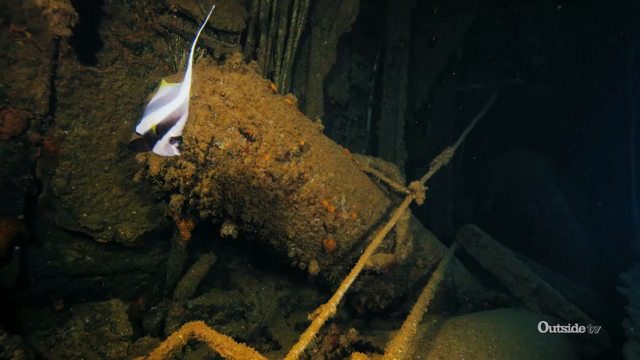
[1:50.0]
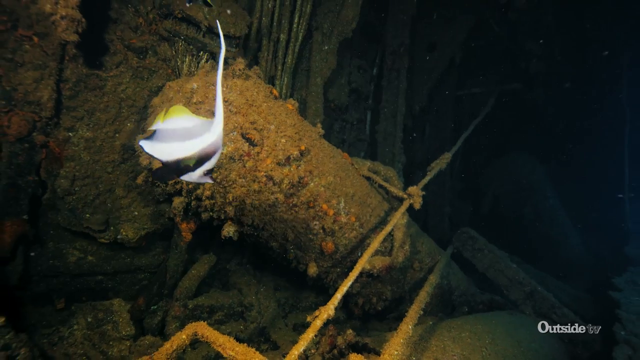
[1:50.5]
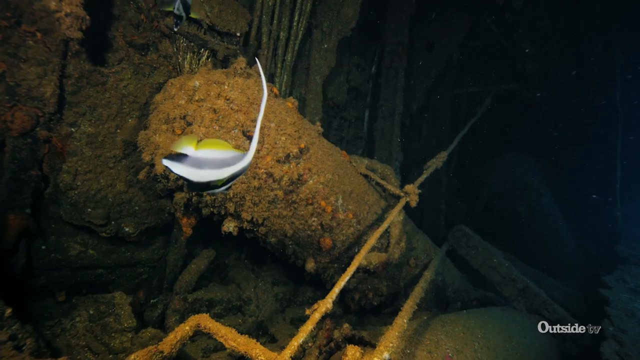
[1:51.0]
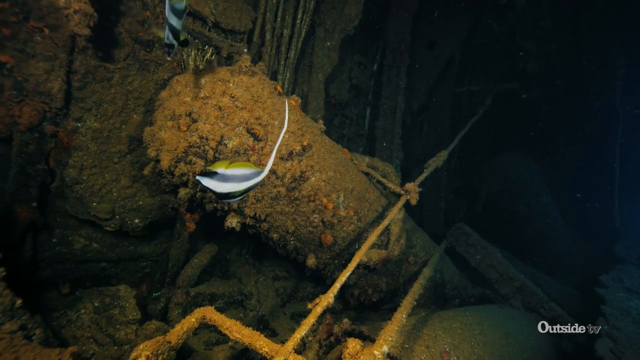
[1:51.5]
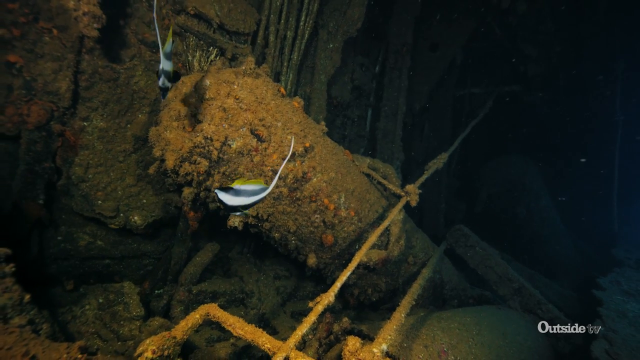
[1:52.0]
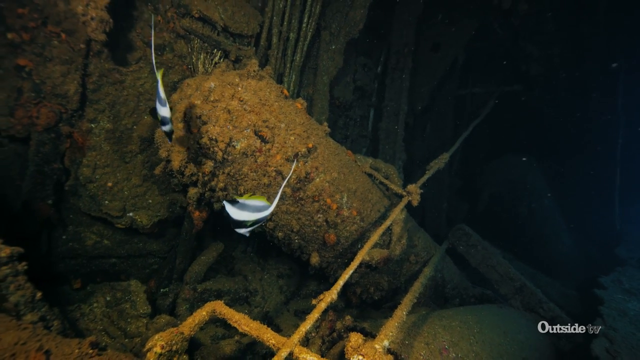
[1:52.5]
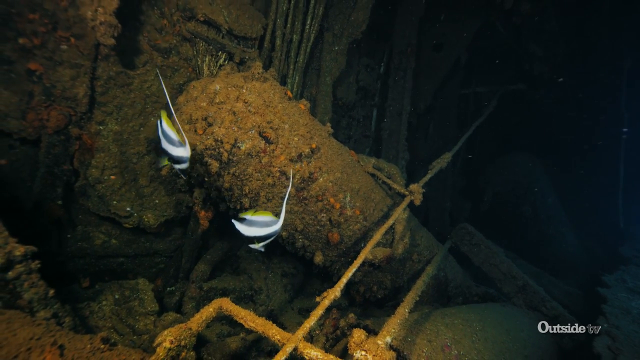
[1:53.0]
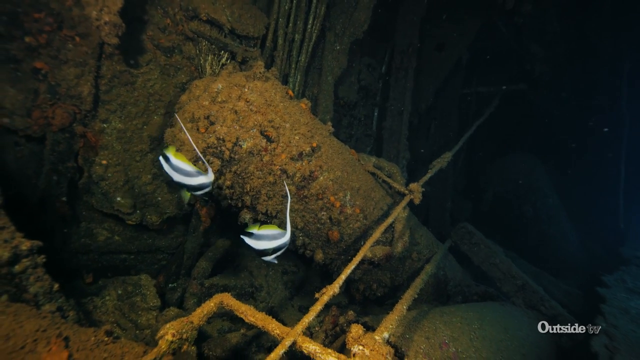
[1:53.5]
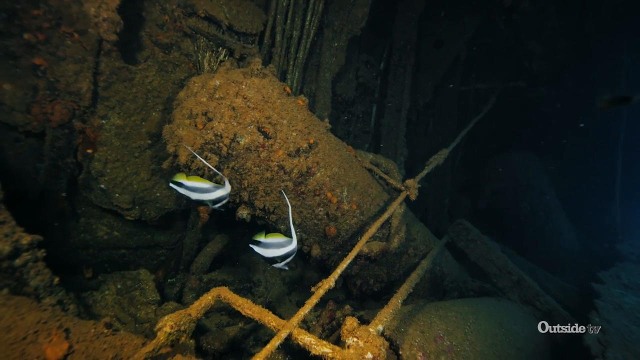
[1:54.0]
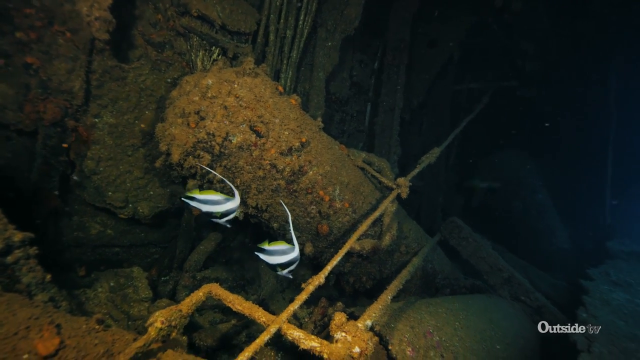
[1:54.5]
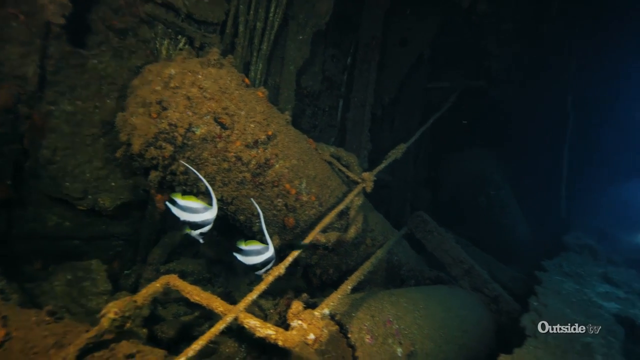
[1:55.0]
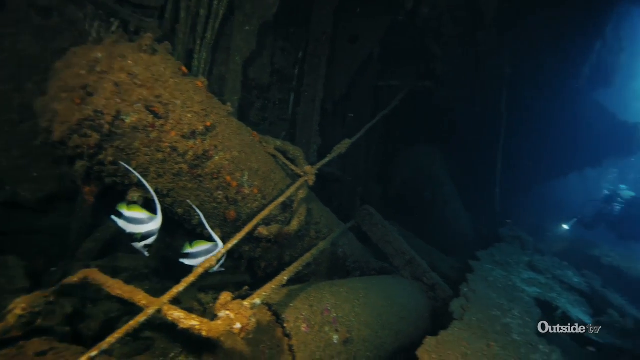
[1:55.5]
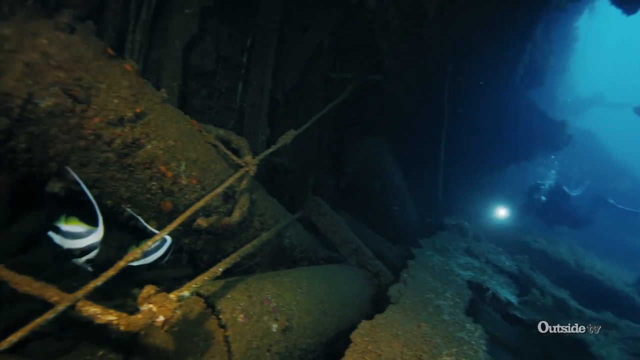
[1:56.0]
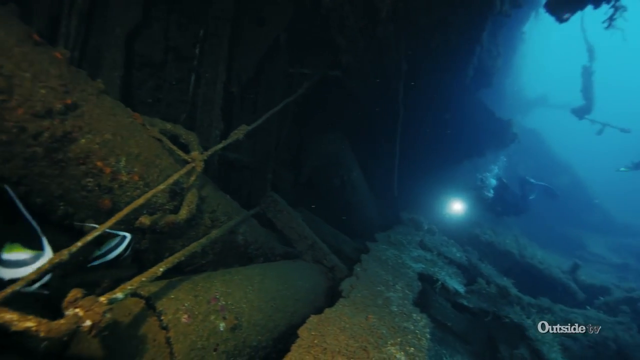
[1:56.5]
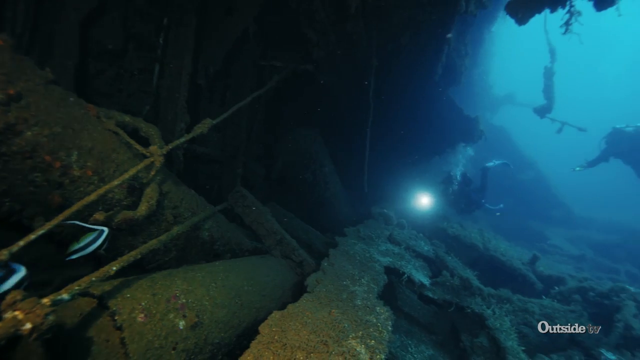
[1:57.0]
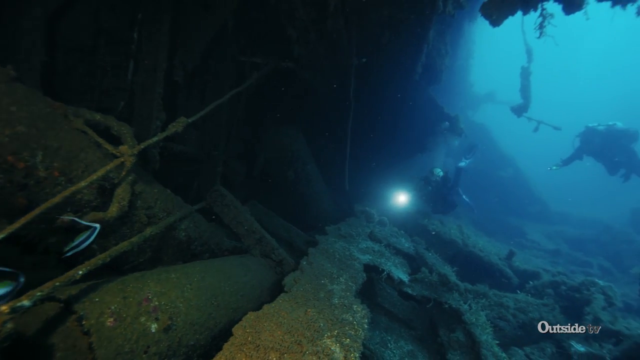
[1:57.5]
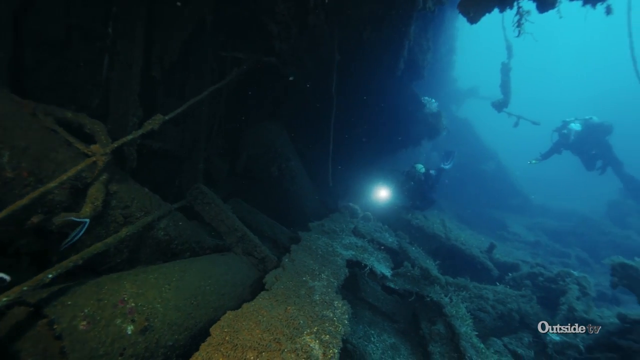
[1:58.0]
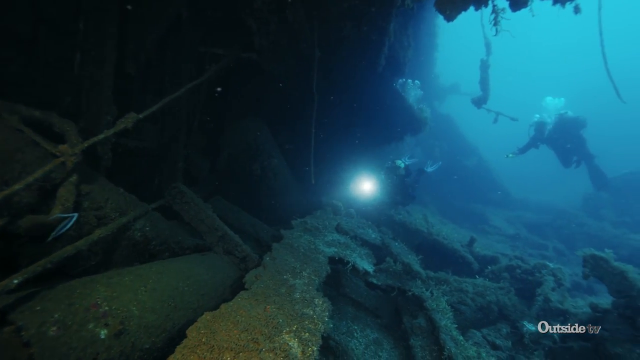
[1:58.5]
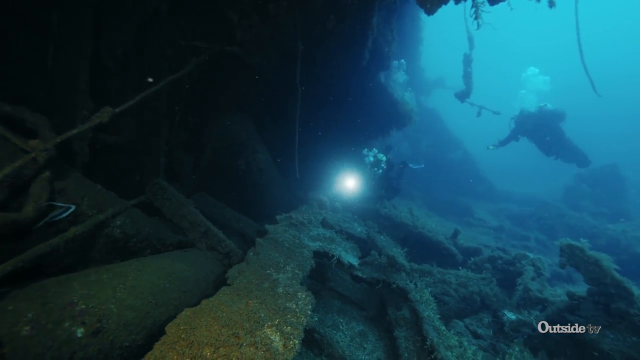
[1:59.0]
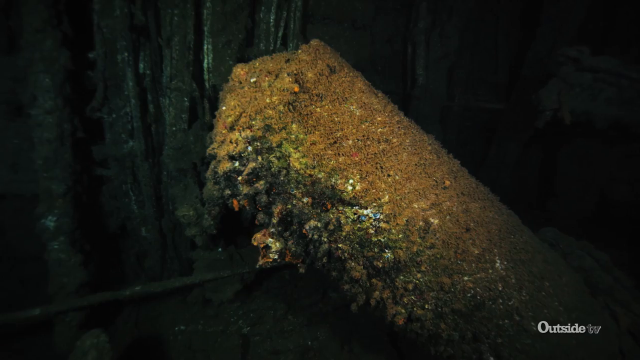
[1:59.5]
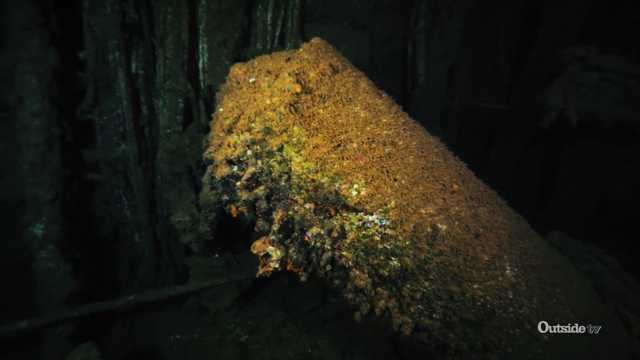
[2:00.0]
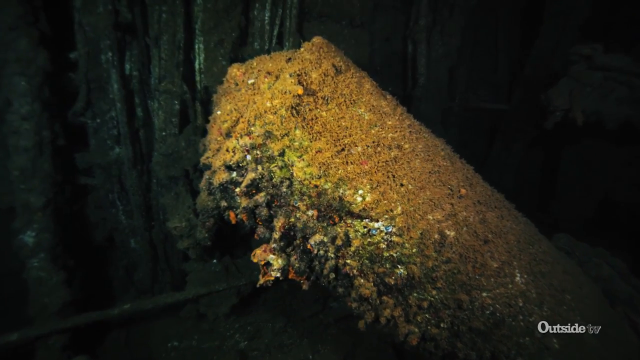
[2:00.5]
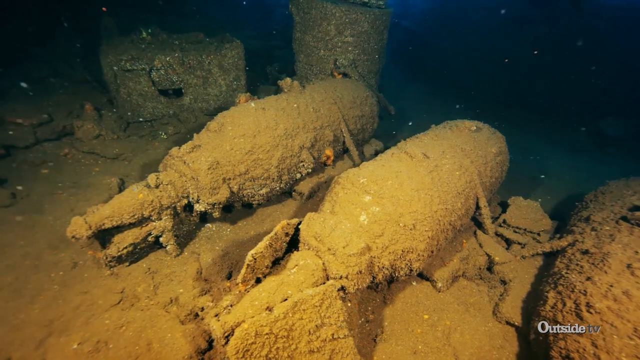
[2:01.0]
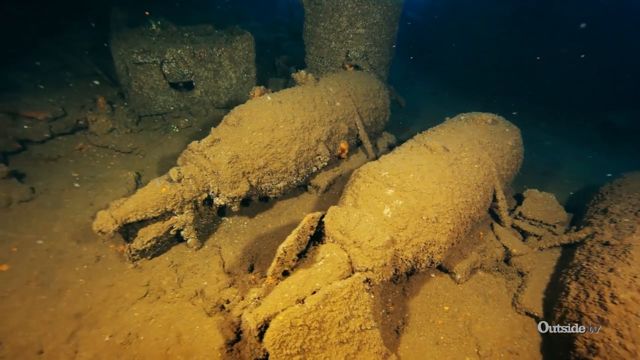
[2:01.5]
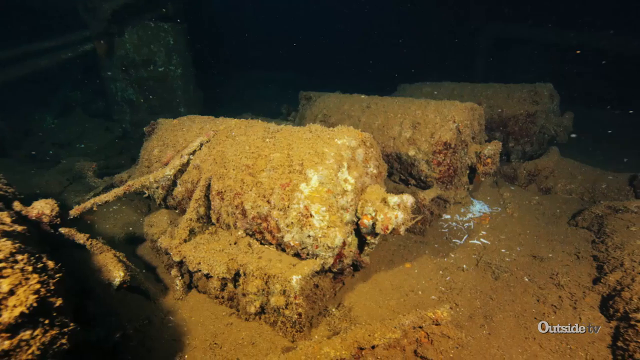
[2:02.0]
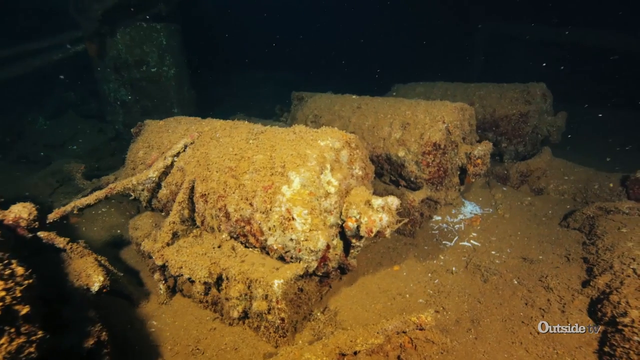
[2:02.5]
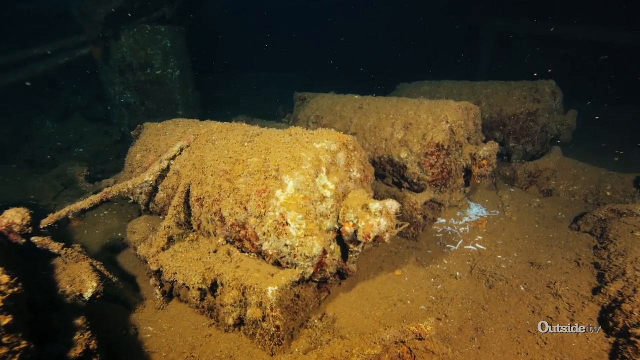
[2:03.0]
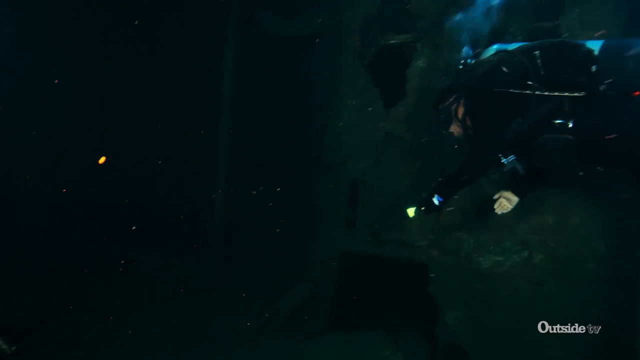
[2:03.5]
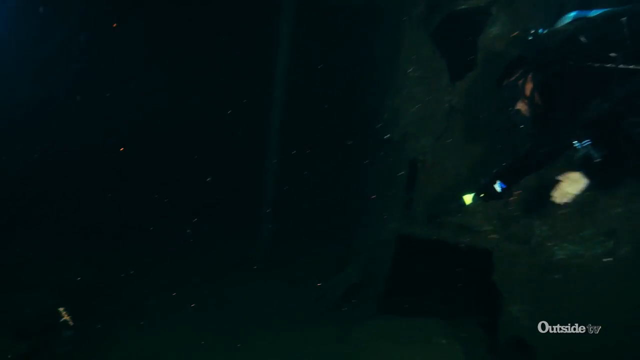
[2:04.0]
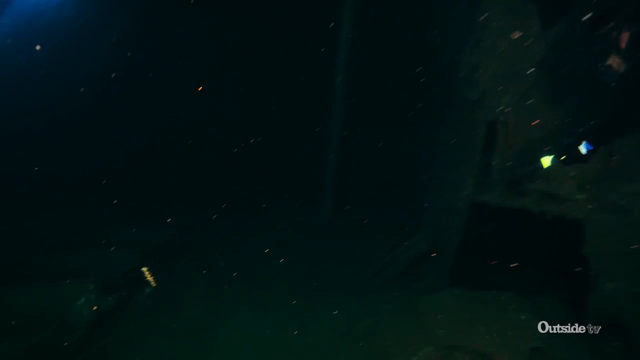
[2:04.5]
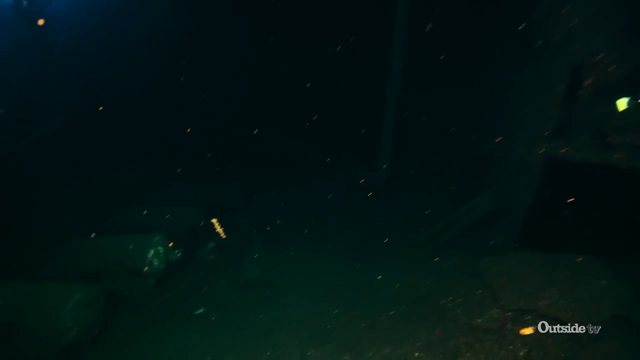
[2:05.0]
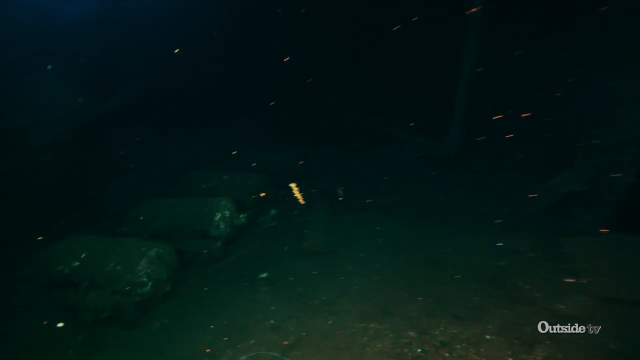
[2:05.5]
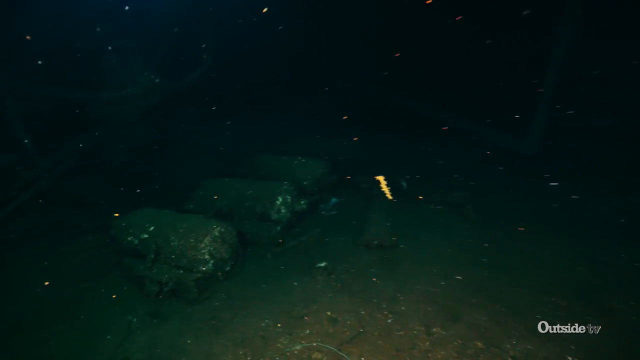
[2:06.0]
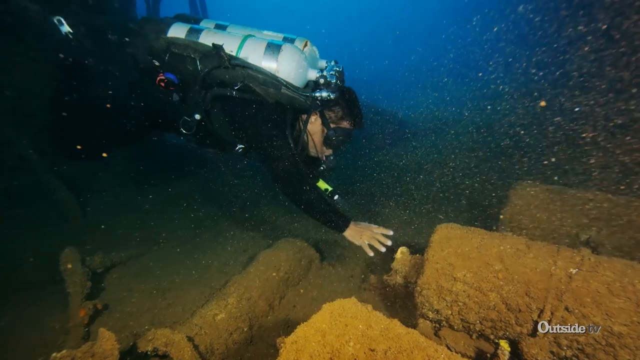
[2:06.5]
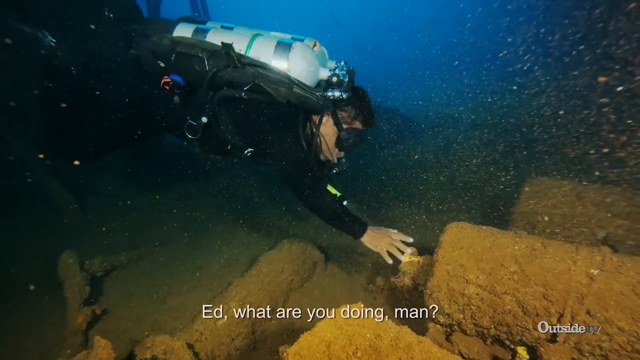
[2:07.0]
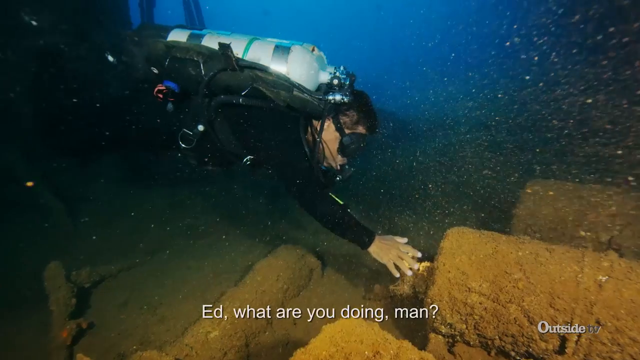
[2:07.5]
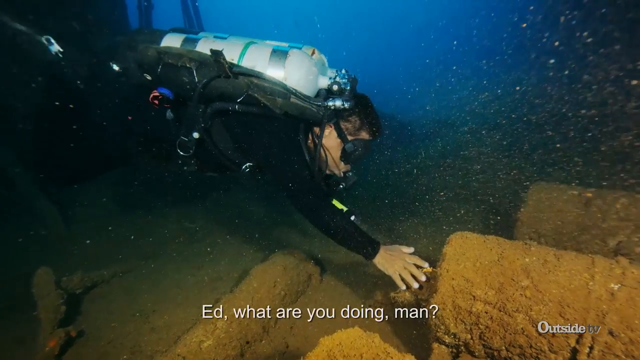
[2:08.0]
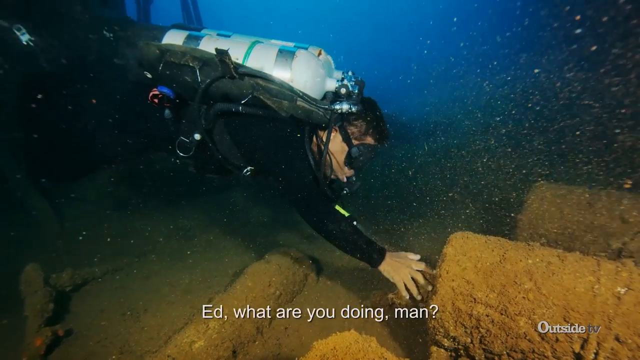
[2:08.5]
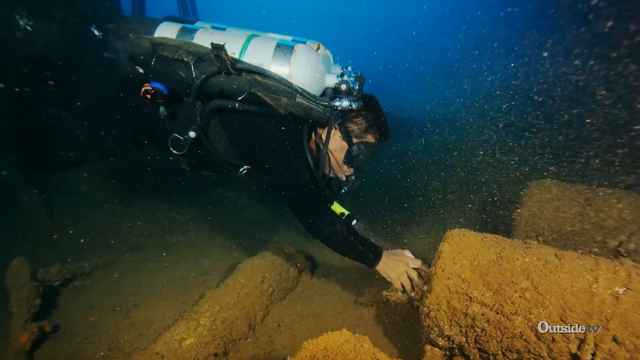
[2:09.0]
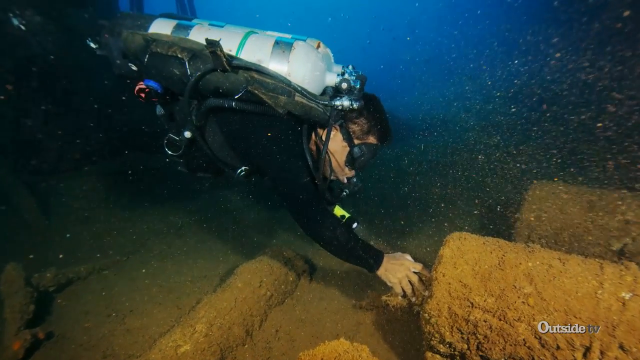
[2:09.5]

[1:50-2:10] Part of a shipwreck is shown with a small fish swimming slowly past, another fish following behind it. The fish are blue, black and yellow and swim slowly through the water, before the camera pans to show two other scuba divers by the wreck of the large ship. A close-up shows a single part of the ship covered in algae, followed by what appear to be two bombs or torpedoes, with visible fins at the back and round fronts, covered in a layer of brown debris or dirt. The shot cuts to a different side of them. Another shot shows a man swimming through the ruins in darkness, then a close-up of a man about to touch one of the bombs. White text reads "Ed, what are you doing, man?" as the man grasps one end of the bomb-like item with his right hand. The text changes to read "Ed tells me that every time he comes down to the wreck."